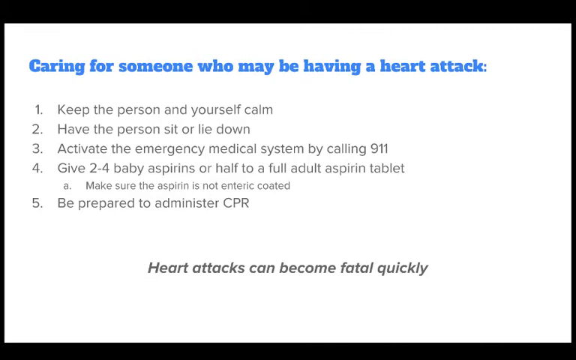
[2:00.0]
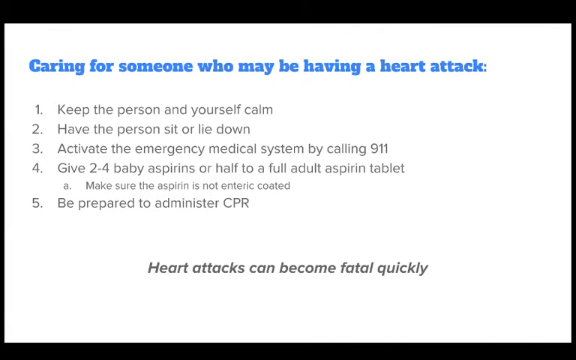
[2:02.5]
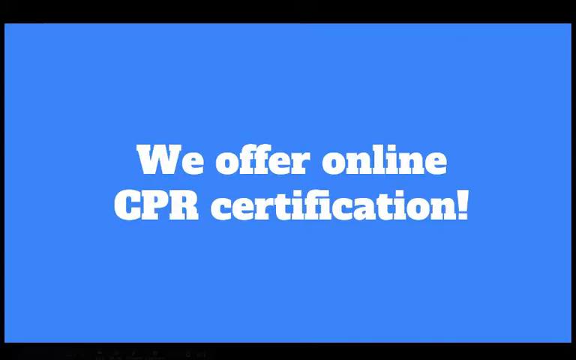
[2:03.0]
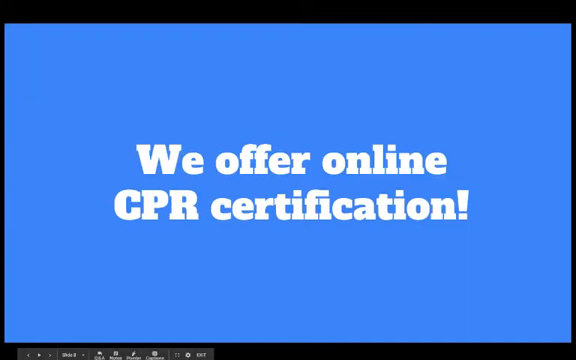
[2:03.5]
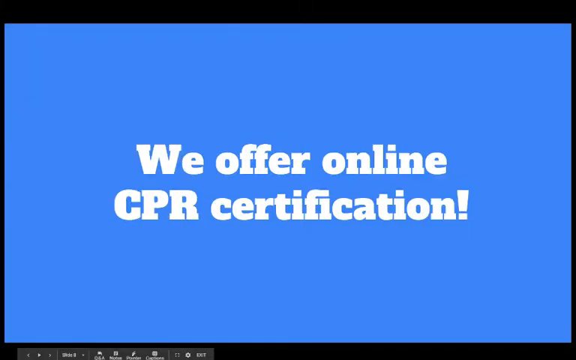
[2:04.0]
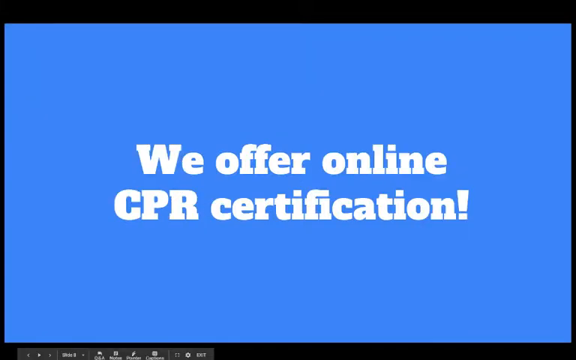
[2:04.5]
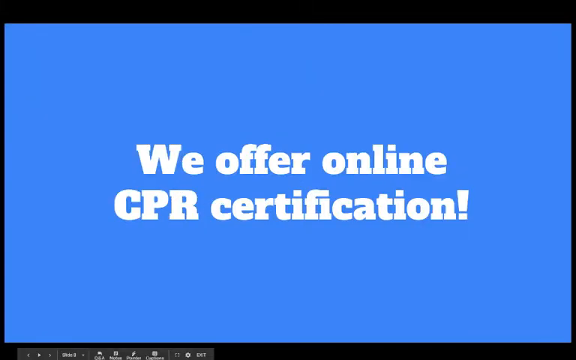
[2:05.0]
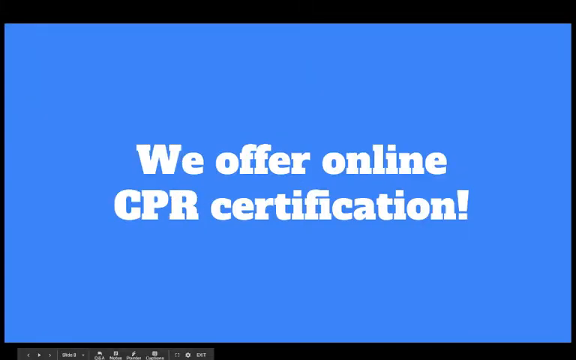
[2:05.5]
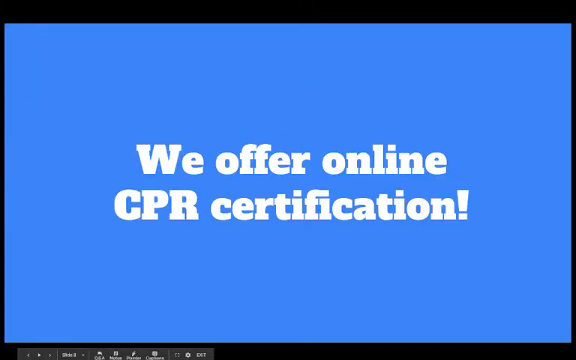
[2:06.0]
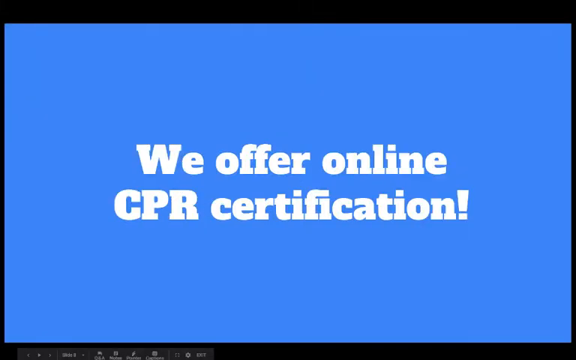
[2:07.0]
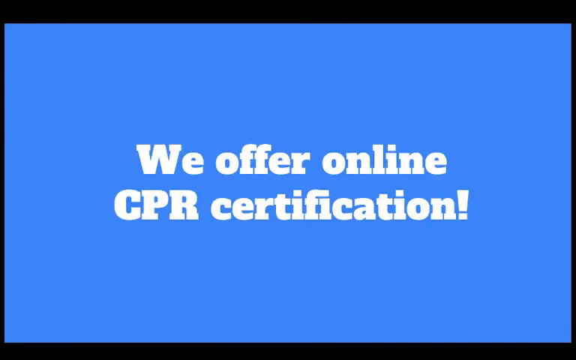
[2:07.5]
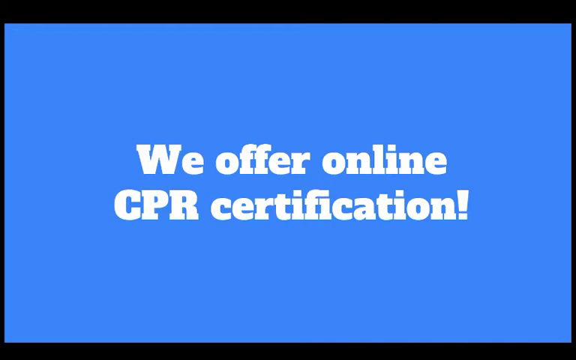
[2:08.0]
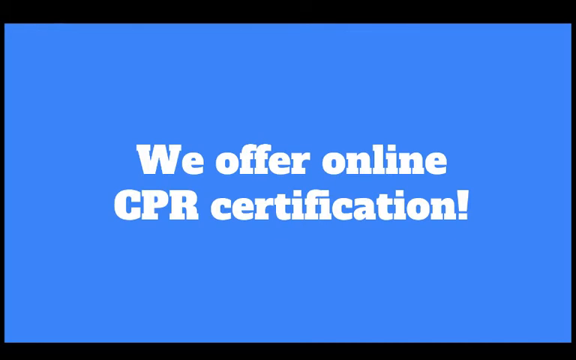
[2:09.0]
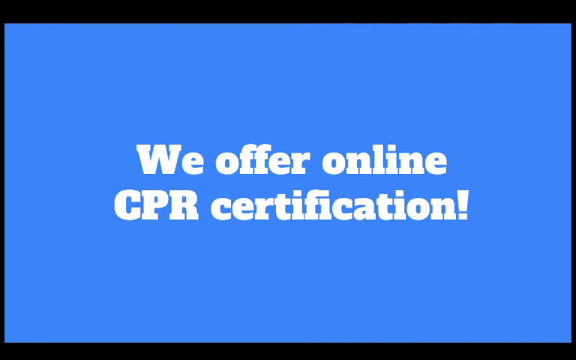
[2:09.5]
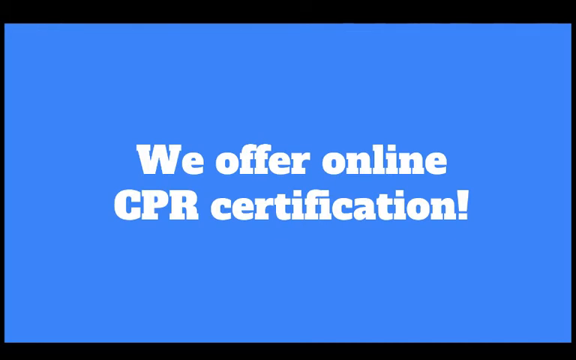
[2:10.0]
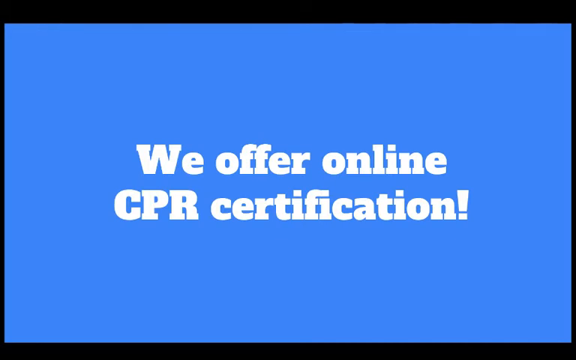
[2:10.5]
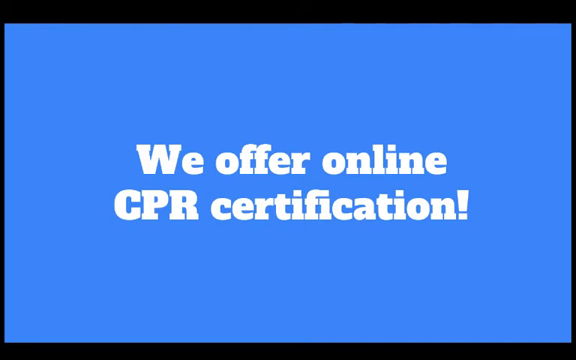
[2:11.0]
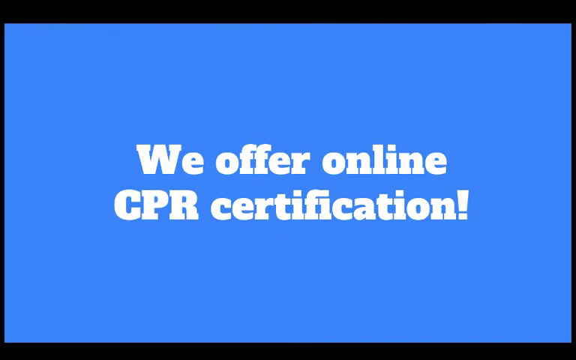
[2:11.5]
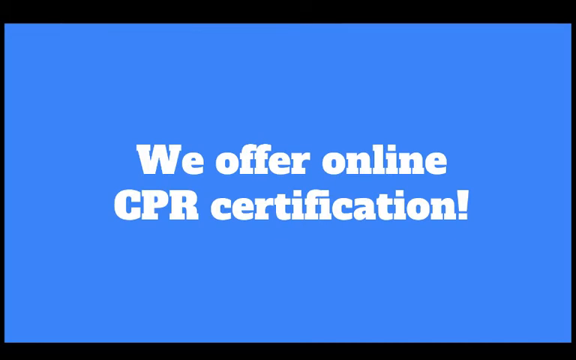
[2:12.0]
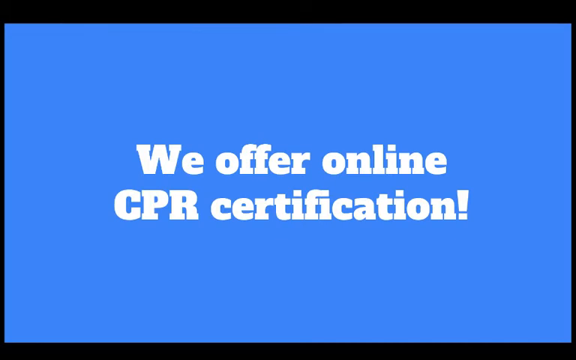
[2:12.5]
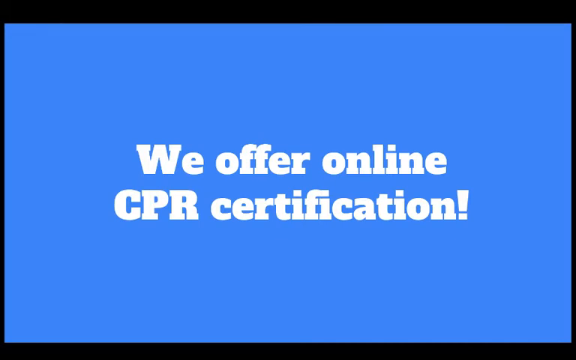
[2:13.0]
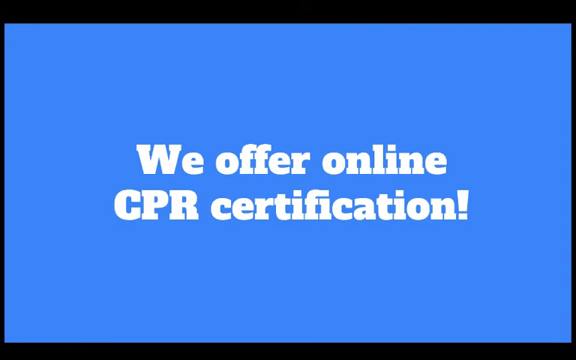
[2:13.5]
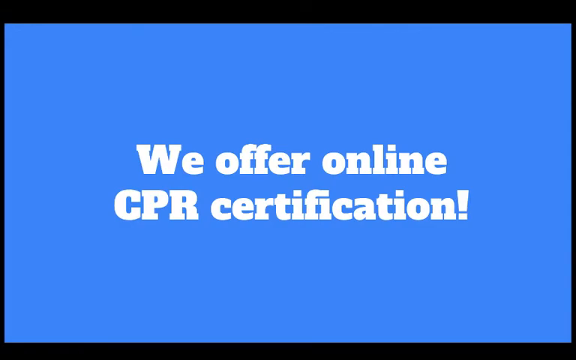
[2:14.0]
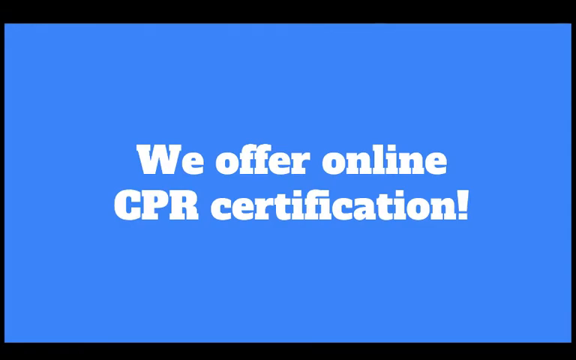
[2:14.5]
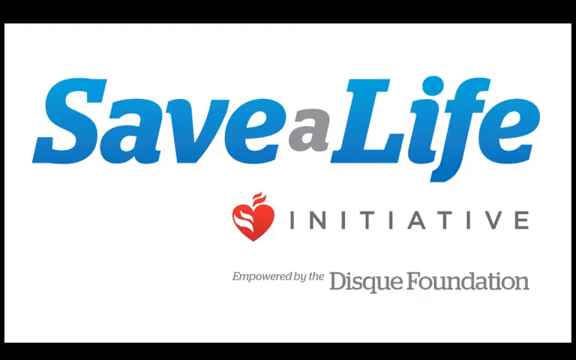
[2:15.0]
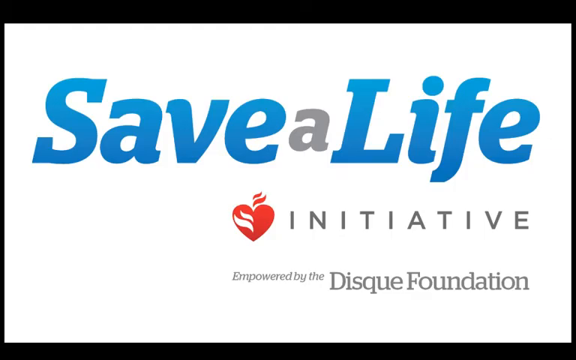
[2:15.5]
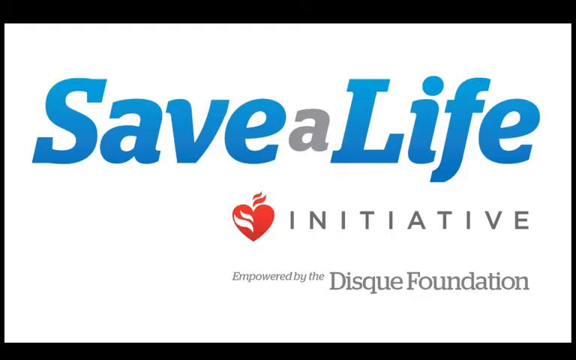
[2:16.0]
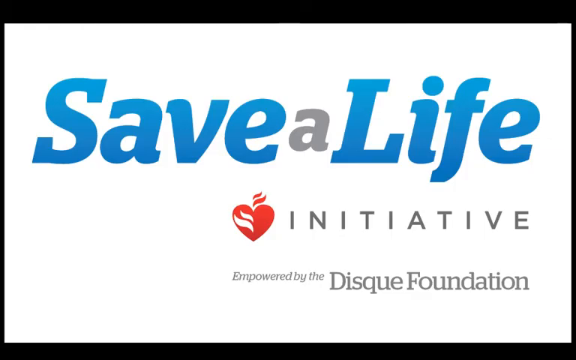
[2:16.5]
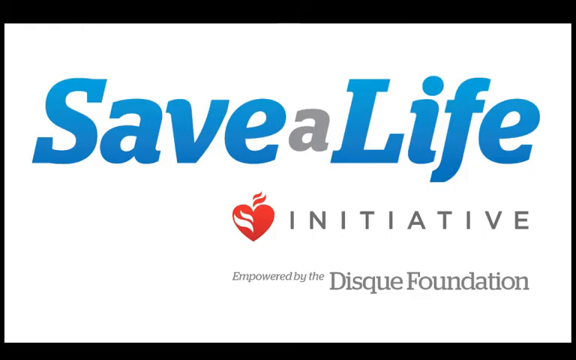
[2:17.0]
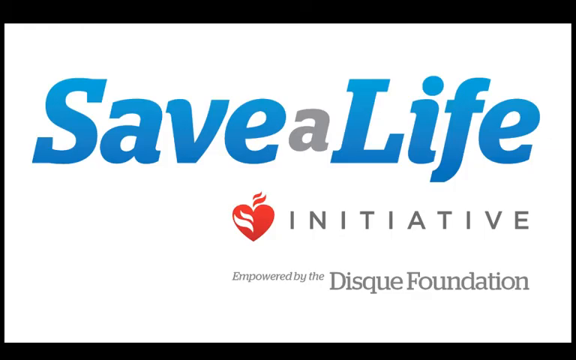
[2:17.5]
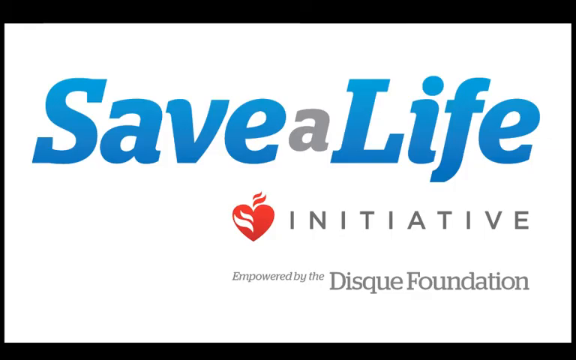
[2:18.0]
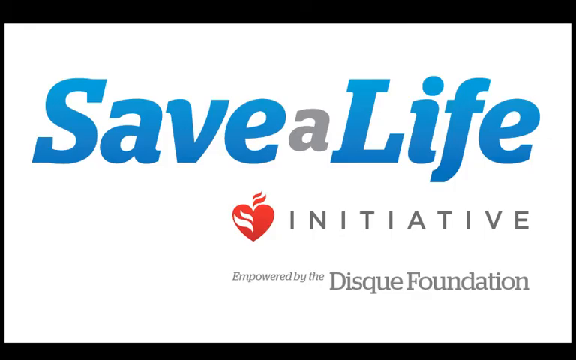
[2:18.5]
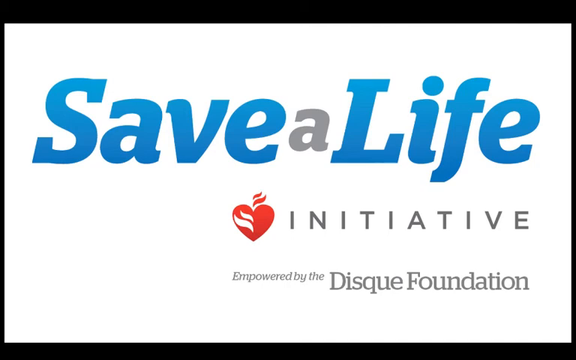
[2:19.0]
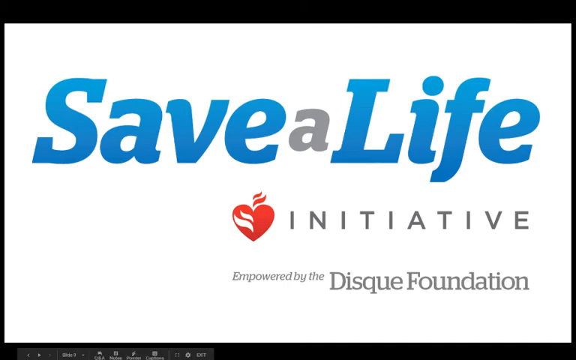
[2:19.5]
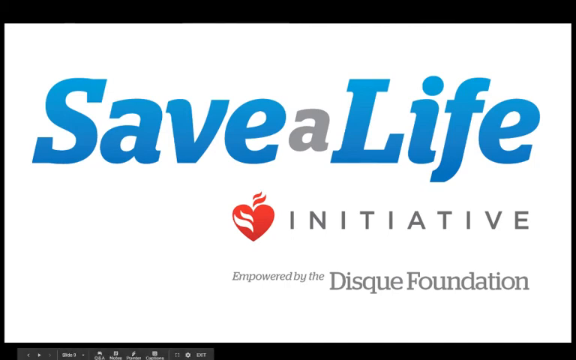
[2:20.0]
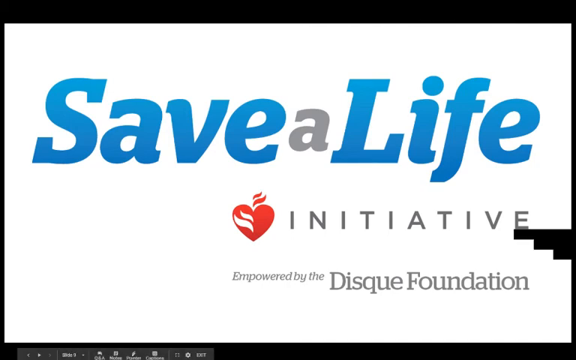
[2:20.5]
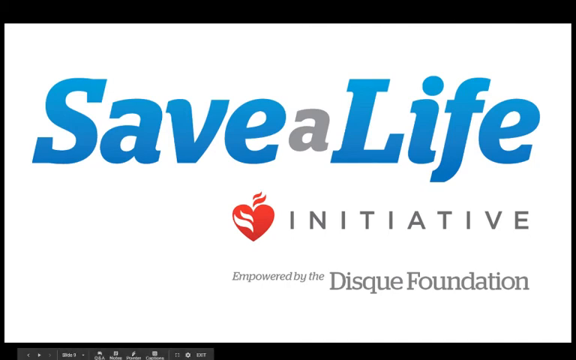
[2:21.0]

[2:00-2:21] The white screen shows blue text at the top reading "Caring for someone who may be having a heart attack", with grey text underneath listed vertically and numbered one to five: "keep the person and yourself calm", "have the person sit or lie down", "activate the emergency medical system by calling 911", "give two to four baby aspirins or half to a full adult aspirin tablet", with a subsection in slightly smaller text reading "A, make sure the aspirin is not enteric coated", and "be prepared to administer CPR". Towards the bottom, slightly thicker, centred grey text reads "heart attacks can become fatal quickly." A hard cut leads to a bright blue background with large white text in the centre reading "We offer online CPR certification". The video then transitions to a white screen showing the Save A Life logo from the first screen. Large text across the top reads "SAVE A LIFE", with "SAVE" and "LIFE" in blue and the "A" in grey between them. Underneath the E of "SAVE" is a red heart logo with two white stripes on the left side of the heart and two red stripes above its right side. Next to the heart symbol is the word "INITIATIVE" in all capitals, and underneath is small grey text reading "EMPOWERED BY THE", followed by slightly larger grey text reading "DISQUE FOUNDATION".